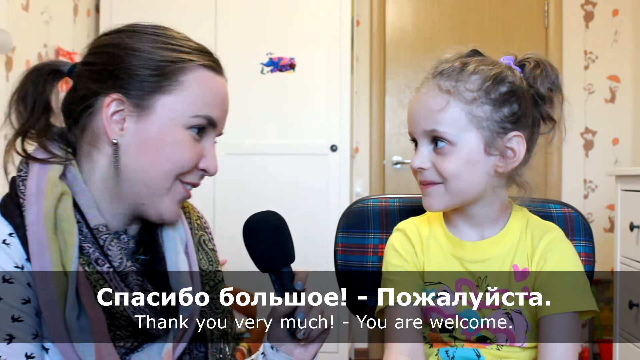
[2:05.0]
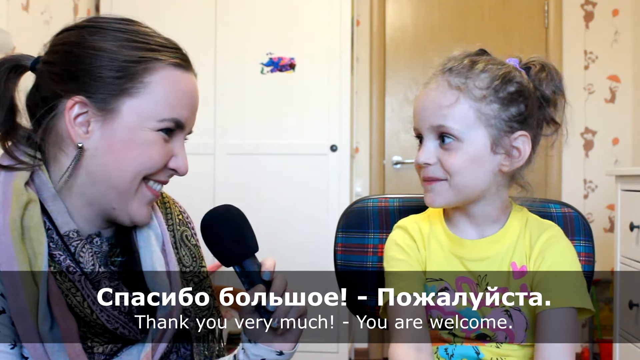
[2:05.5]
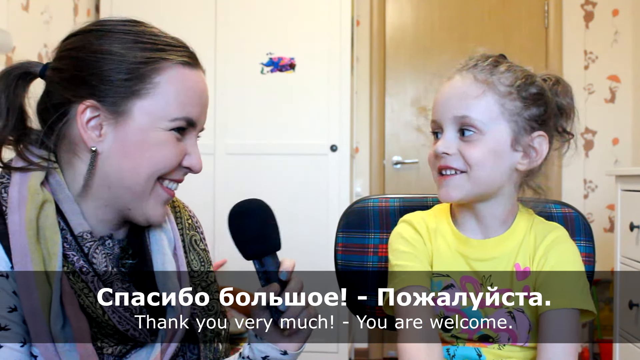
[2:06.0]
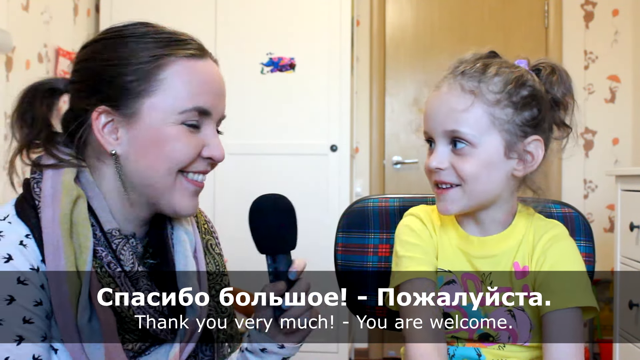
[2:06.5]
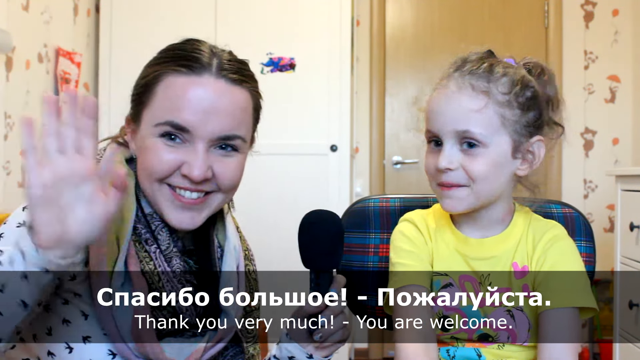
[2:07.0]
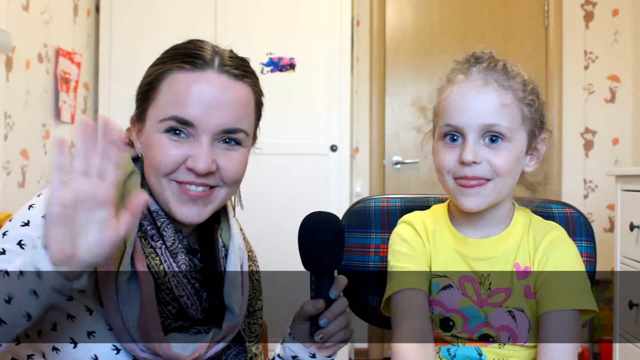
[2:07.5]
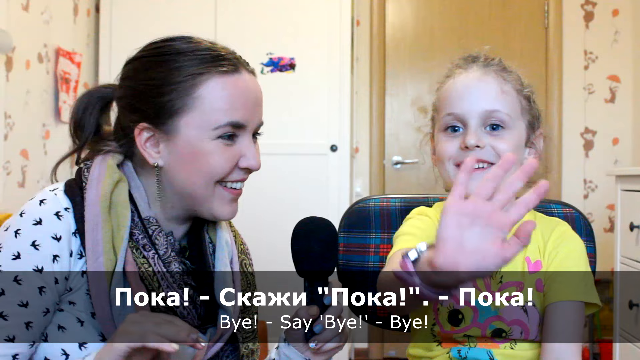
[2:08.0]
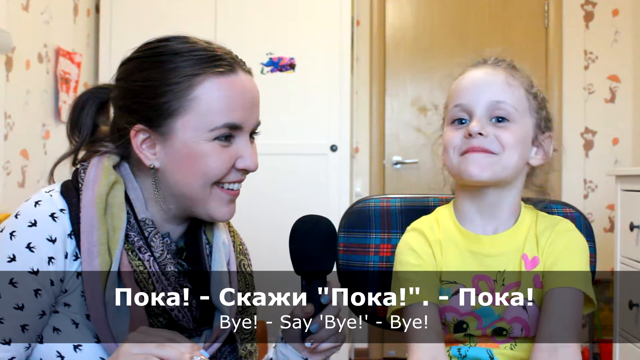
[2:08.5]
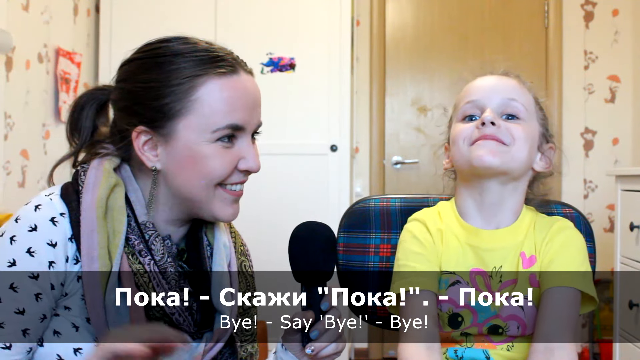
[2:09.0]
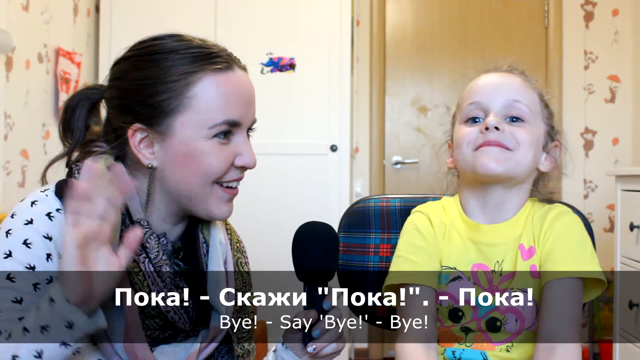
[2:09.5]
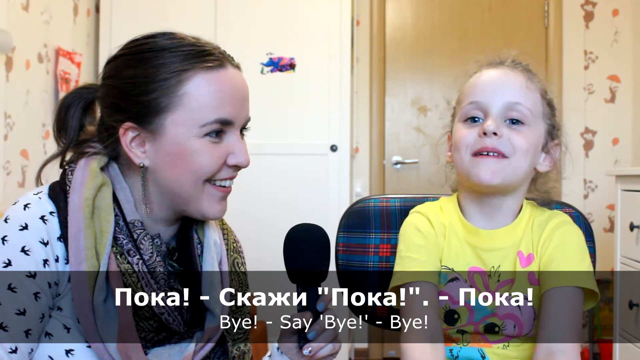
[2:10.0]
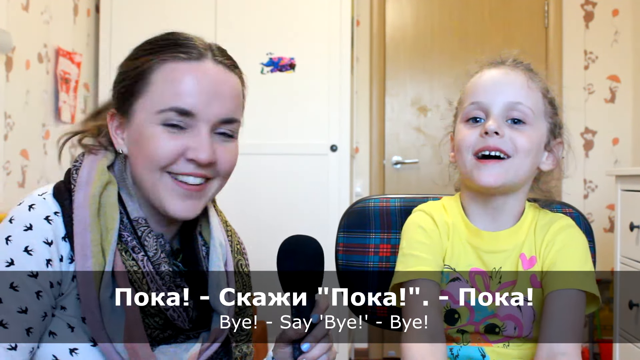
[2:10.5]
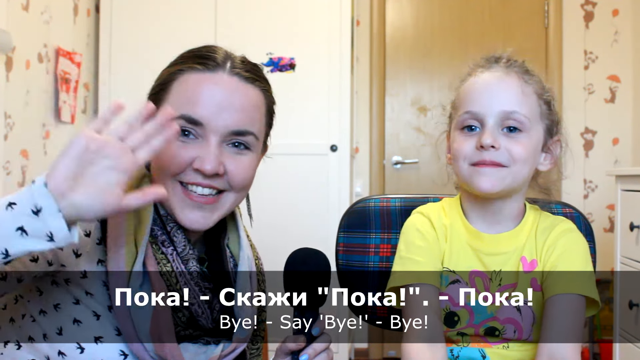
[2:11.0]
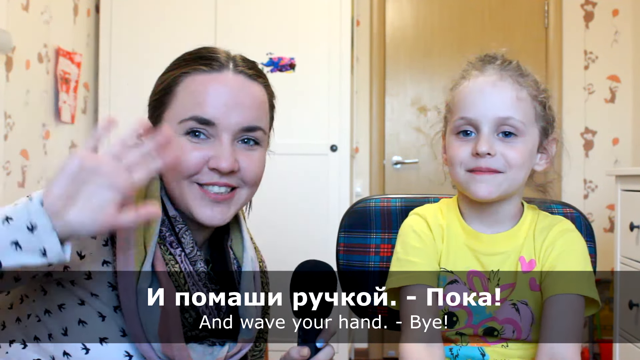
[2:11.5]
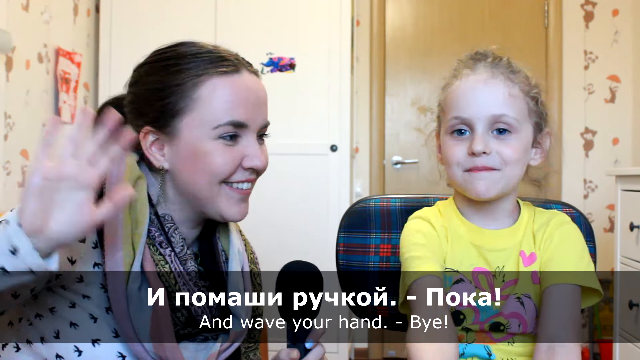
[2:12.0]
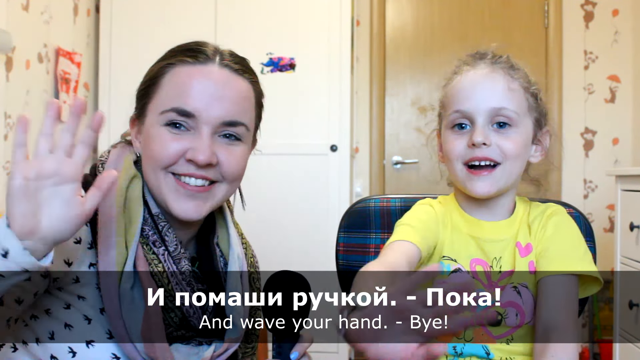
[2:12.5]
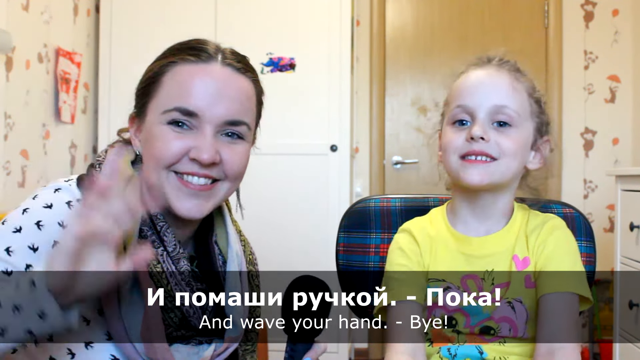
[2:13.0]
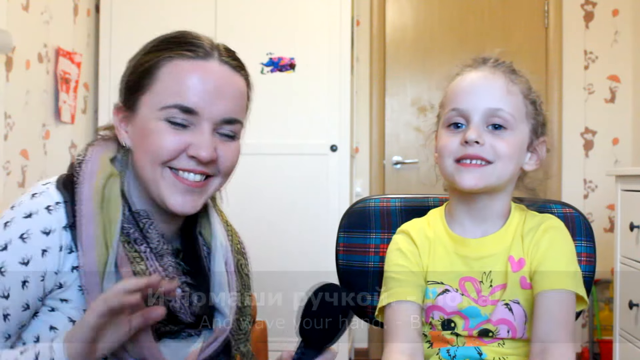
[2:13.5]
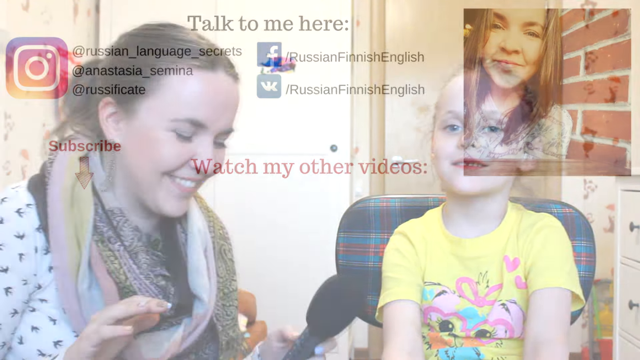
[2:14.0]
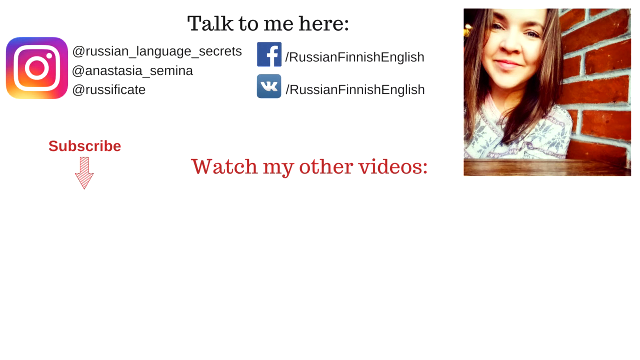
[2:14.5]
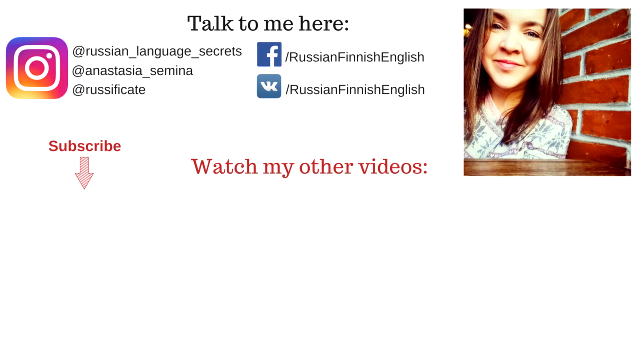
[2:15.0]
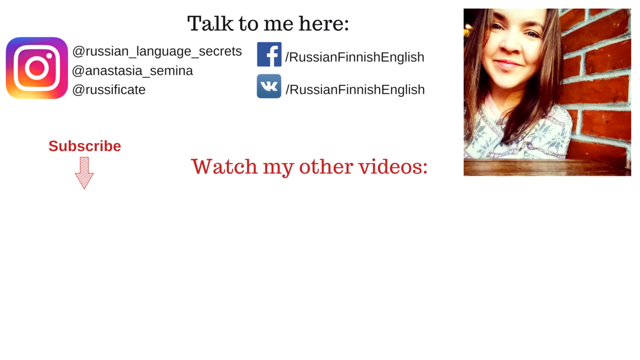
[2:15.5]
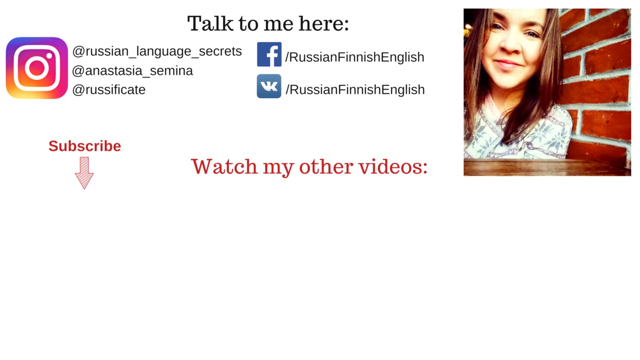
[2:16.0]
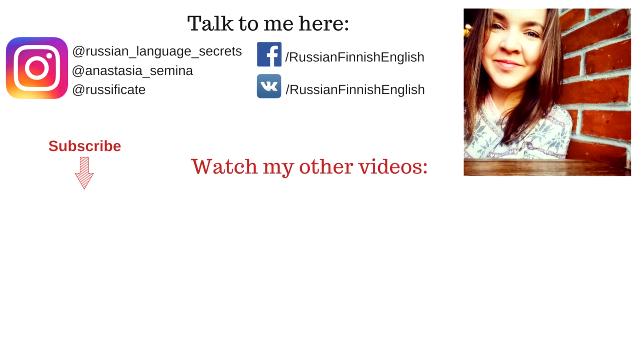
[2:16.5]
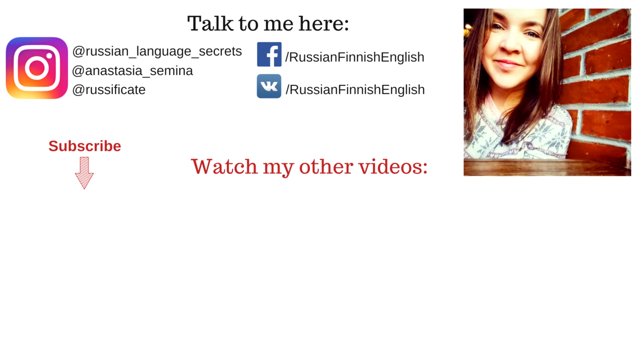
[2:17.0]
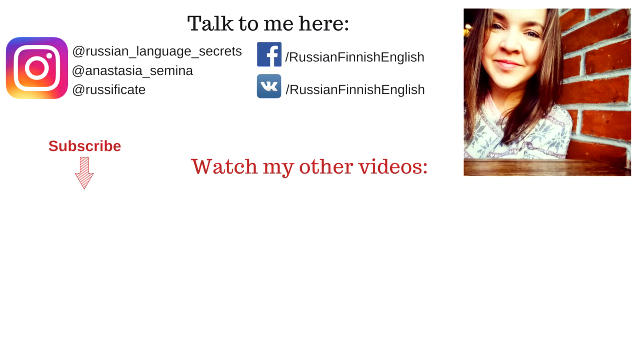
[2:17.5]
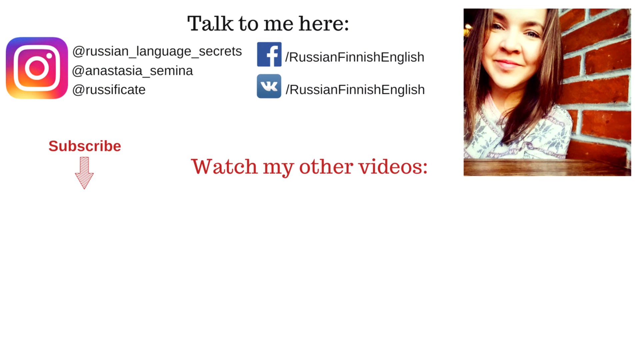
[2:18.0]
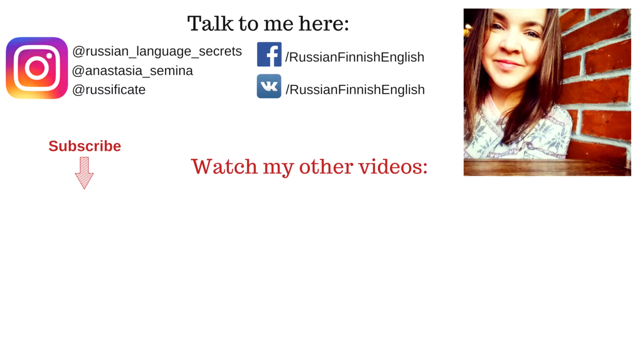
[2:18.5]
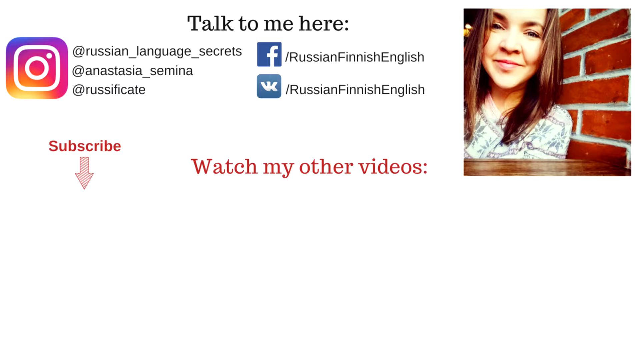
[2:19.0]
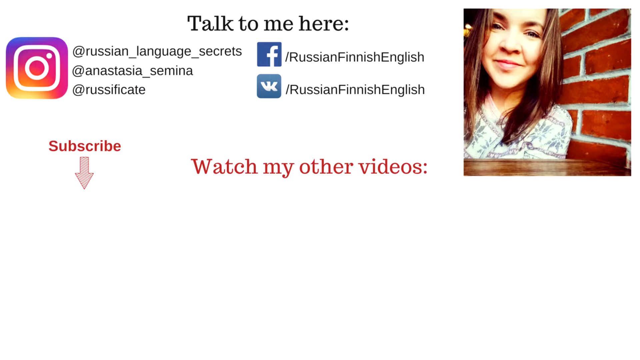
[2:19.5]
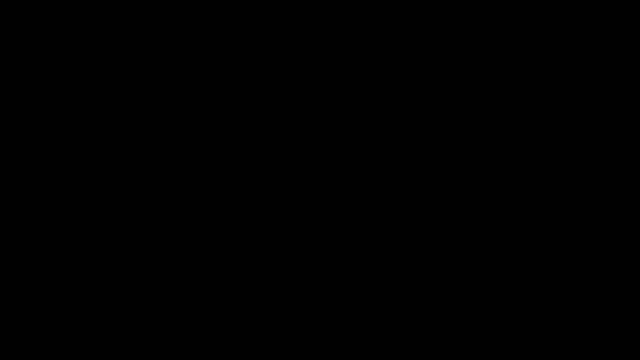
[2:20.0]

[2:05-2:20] The woman says thank you very much and the girl says you are welcome. Both start smiling, looking at the camera and waving. The woman says "say bye" and the girl says bye; the woman says "wave your hand" and the girl waves her hand. They both look happy and excited, and the woman's dangly earrings swing around as she waves. The scene then dissolves into an end screen with photos of the woman. "Talk to me here" appears at the top on a white background, followed by Instagram, Facebook and another unfamiliar symbol, apparently social media, which is blue with what may be a Cyrillic letter on it. "Russian Finnish English" appears next to Facebook and that symbol. "Subscribe" appears in red with a red arrow at the bottom right pointing to a picture of the woman. "Watch my other videos" is in the bottom middle with a playlist of 29 videos. On the right are a couple of thumbnail photos of the woman smiling: in one she is next to a brick wall, smiling, and in another she is outside by a mountain, looking into the distance.